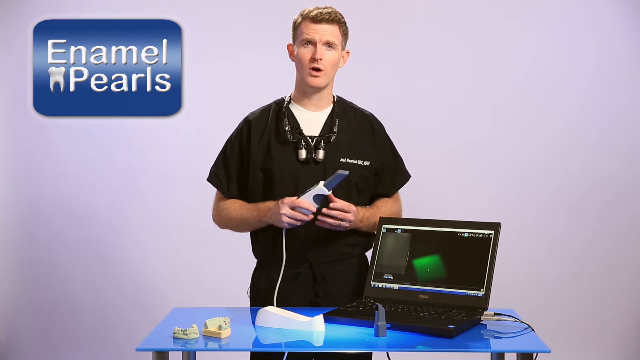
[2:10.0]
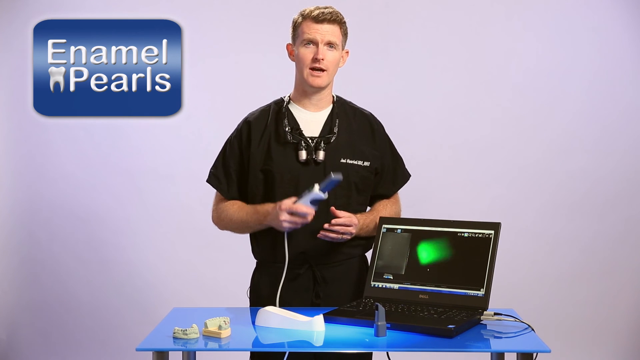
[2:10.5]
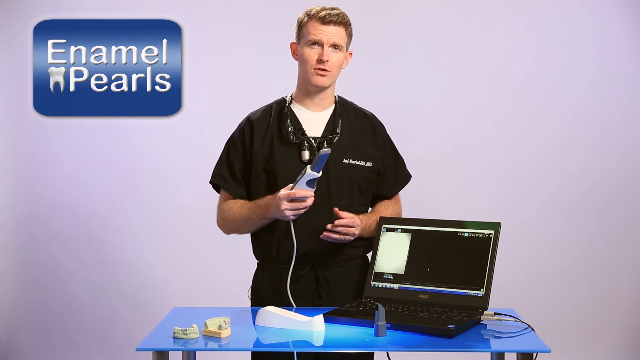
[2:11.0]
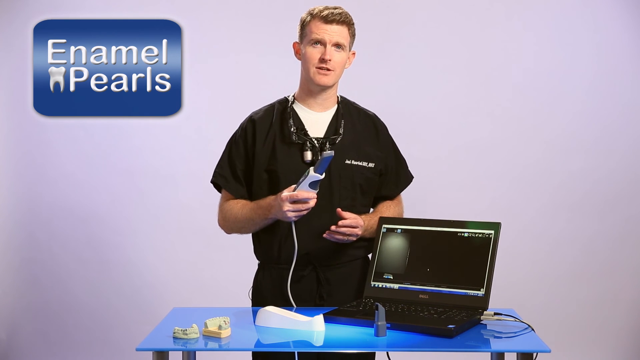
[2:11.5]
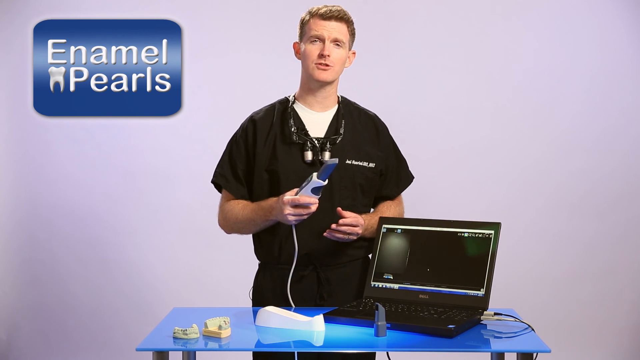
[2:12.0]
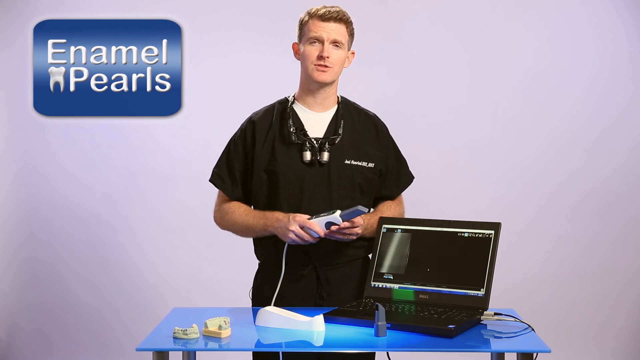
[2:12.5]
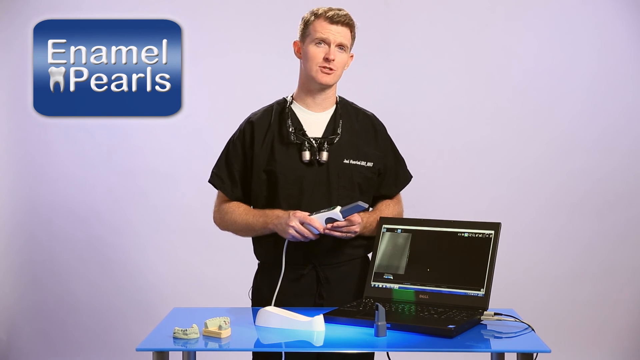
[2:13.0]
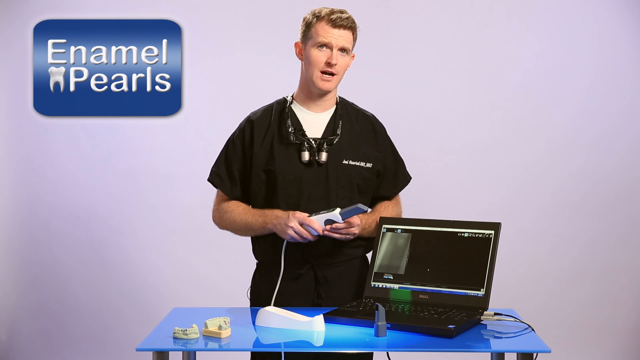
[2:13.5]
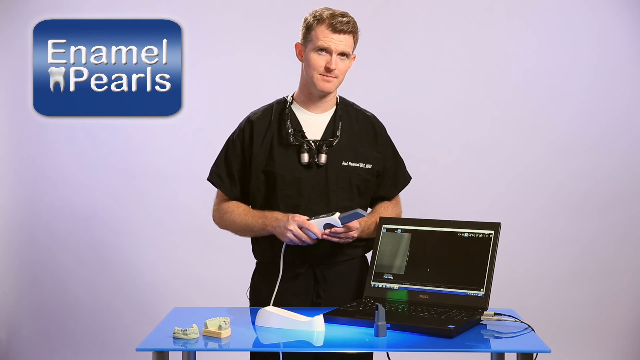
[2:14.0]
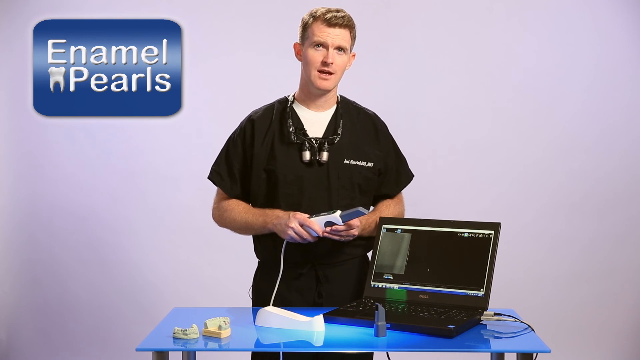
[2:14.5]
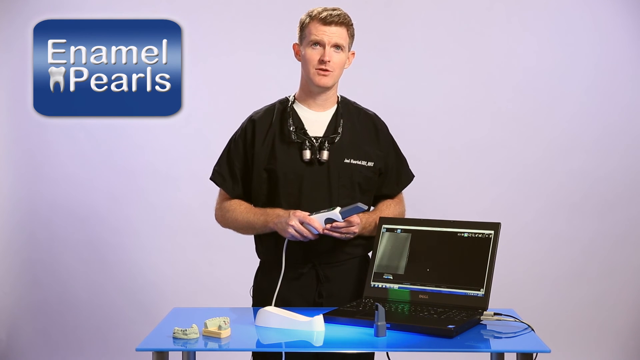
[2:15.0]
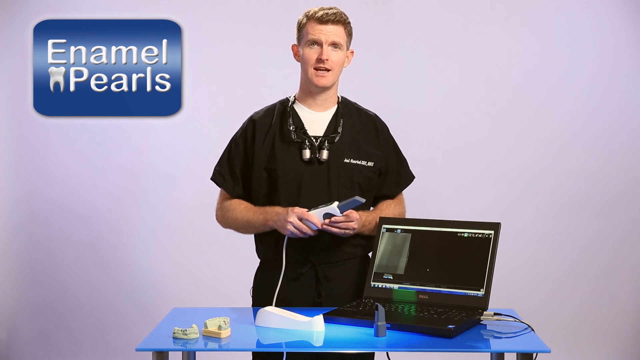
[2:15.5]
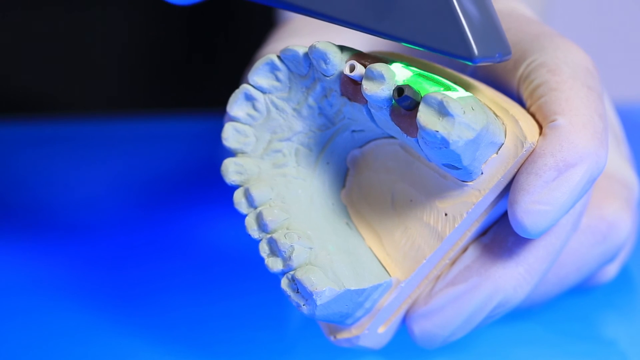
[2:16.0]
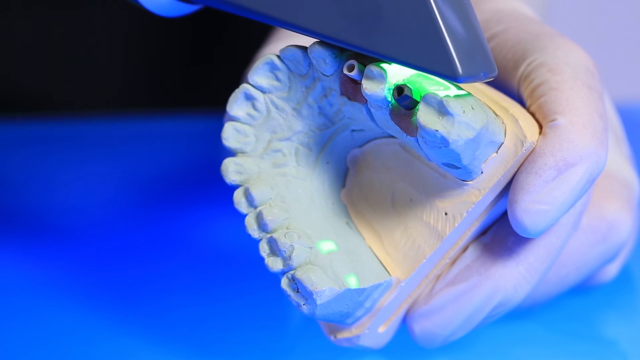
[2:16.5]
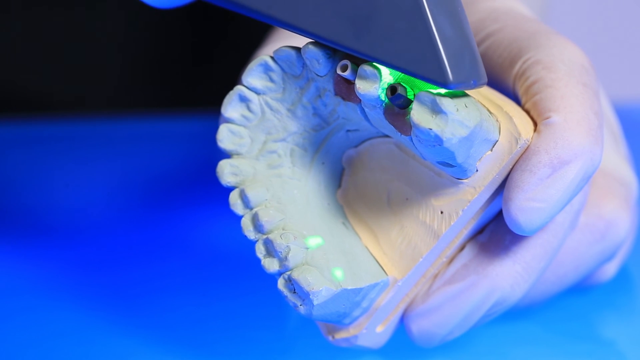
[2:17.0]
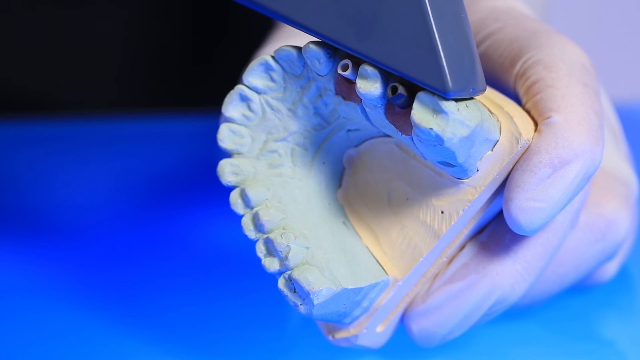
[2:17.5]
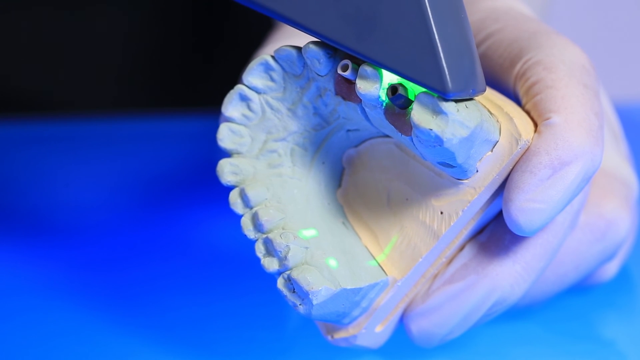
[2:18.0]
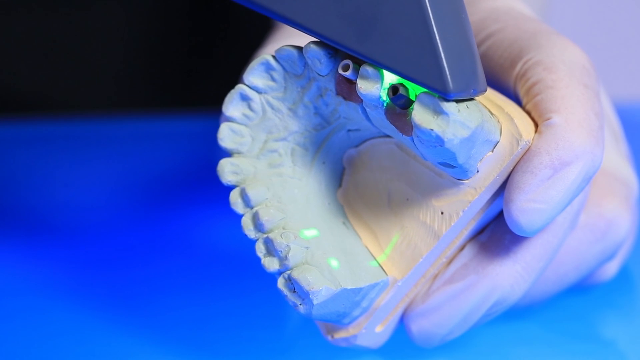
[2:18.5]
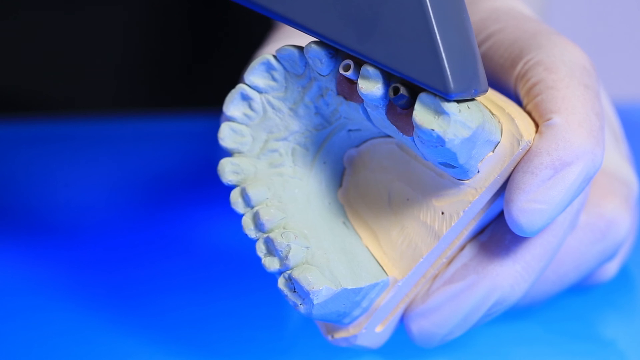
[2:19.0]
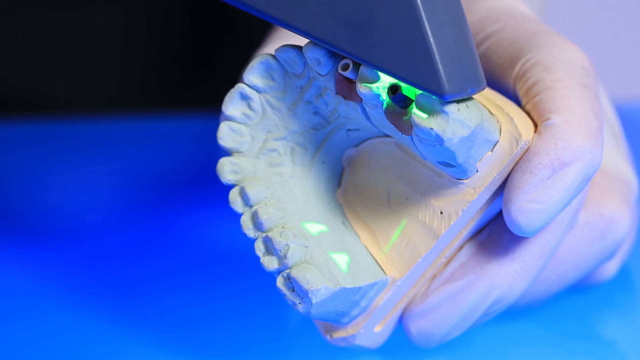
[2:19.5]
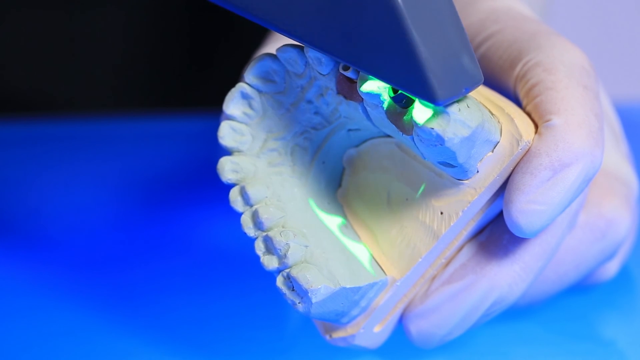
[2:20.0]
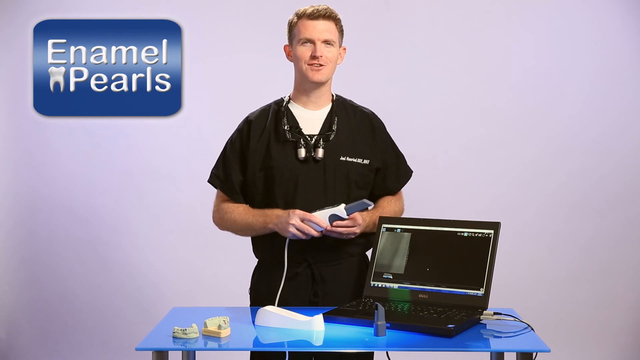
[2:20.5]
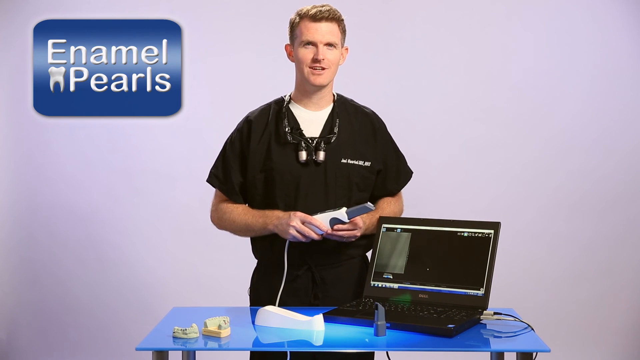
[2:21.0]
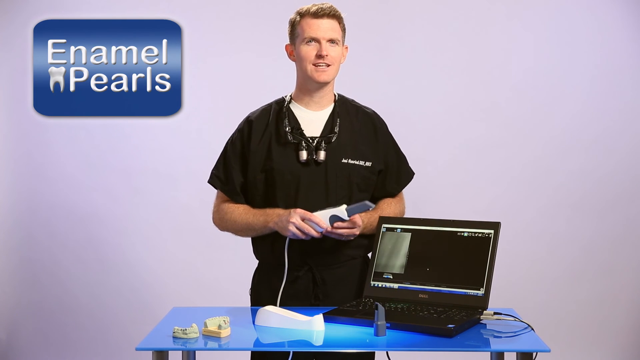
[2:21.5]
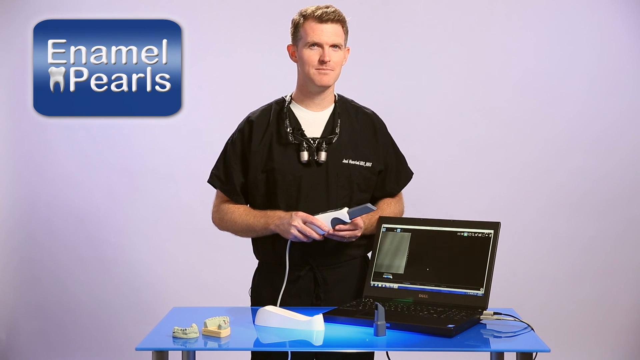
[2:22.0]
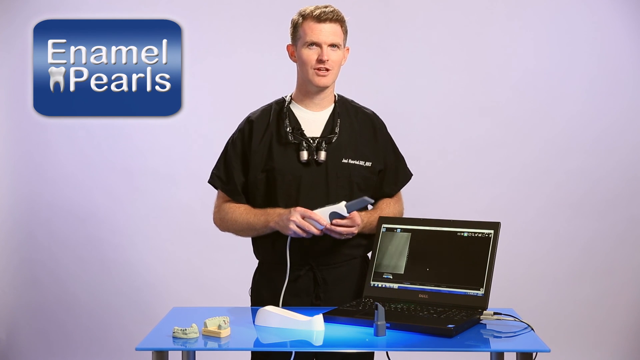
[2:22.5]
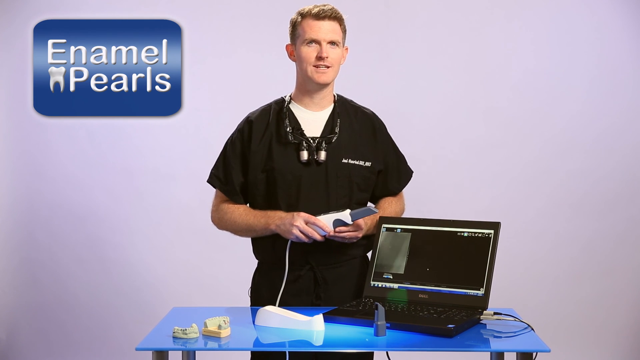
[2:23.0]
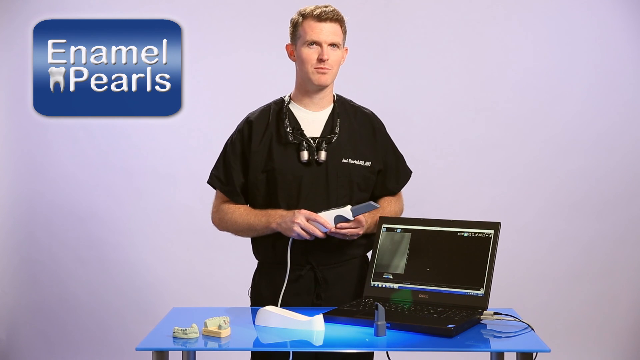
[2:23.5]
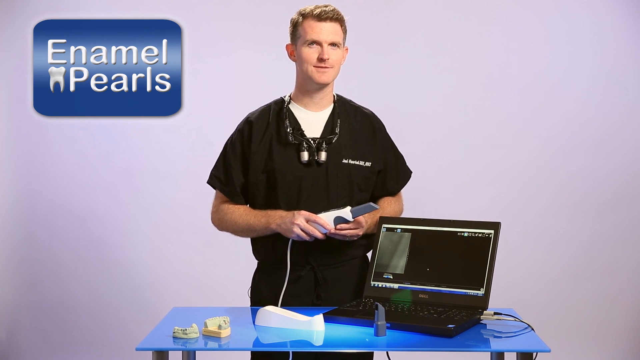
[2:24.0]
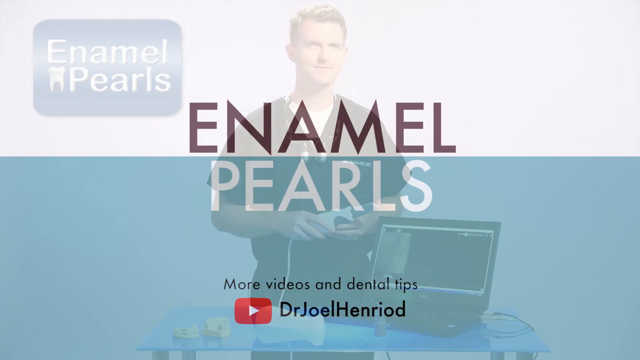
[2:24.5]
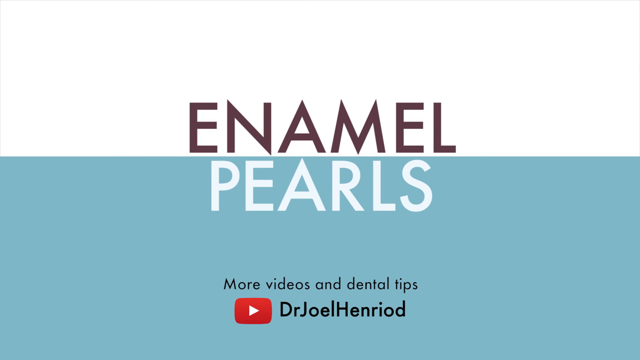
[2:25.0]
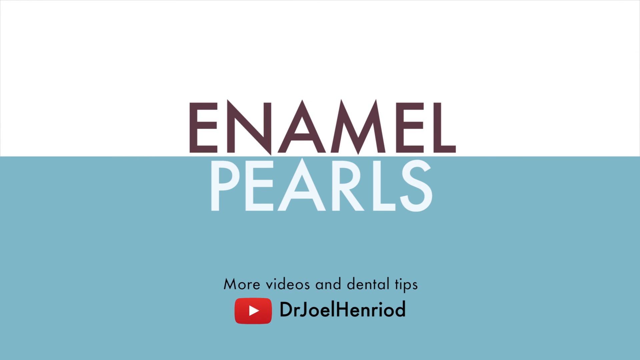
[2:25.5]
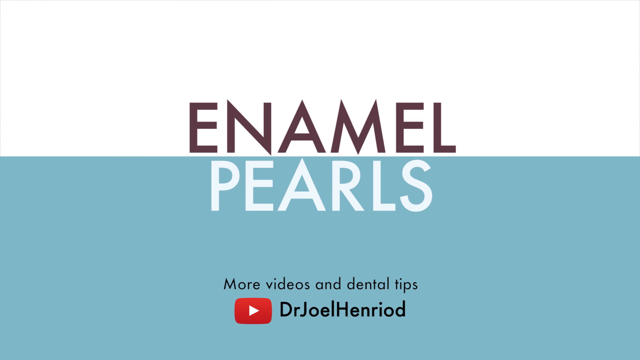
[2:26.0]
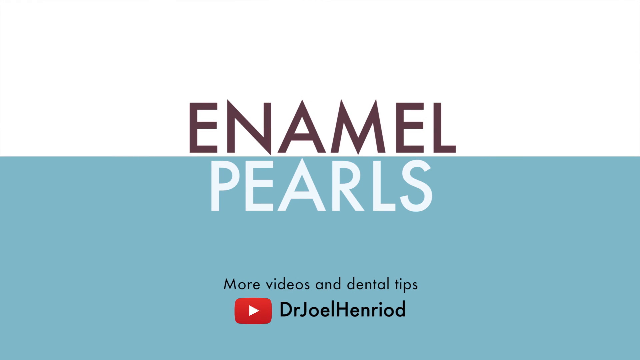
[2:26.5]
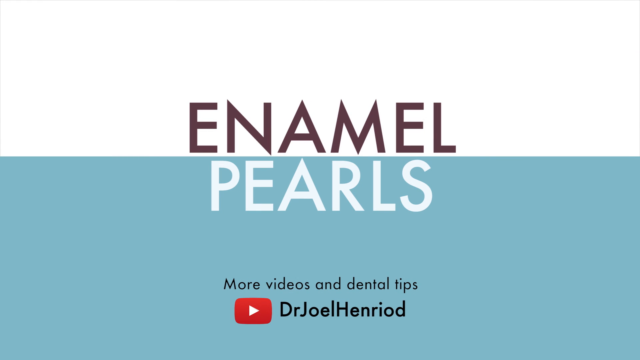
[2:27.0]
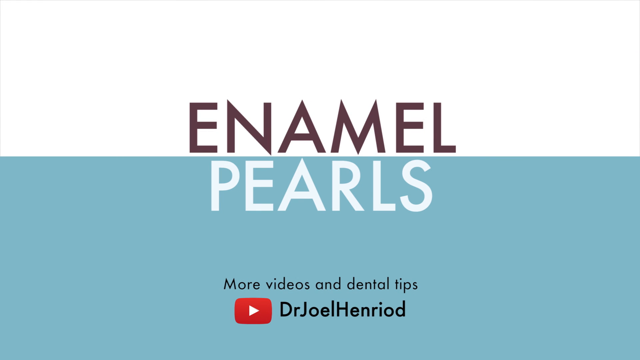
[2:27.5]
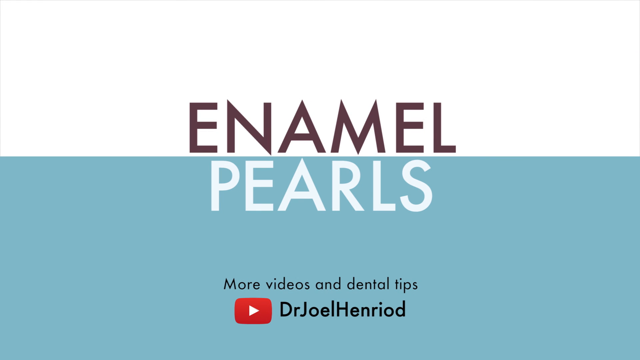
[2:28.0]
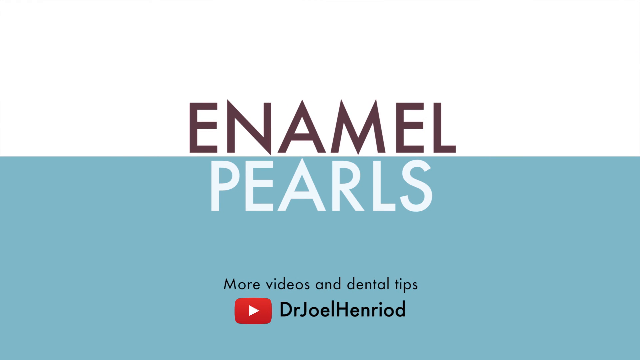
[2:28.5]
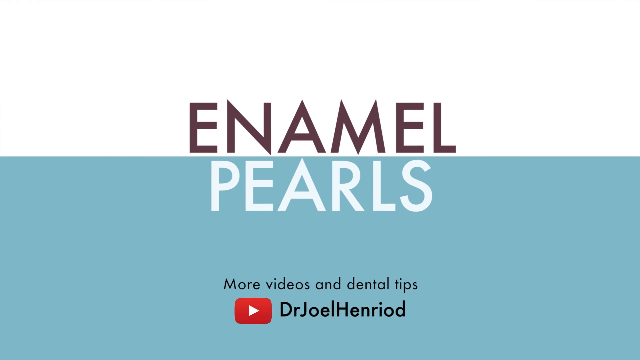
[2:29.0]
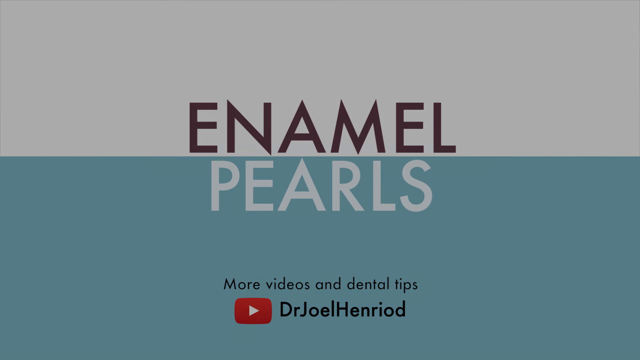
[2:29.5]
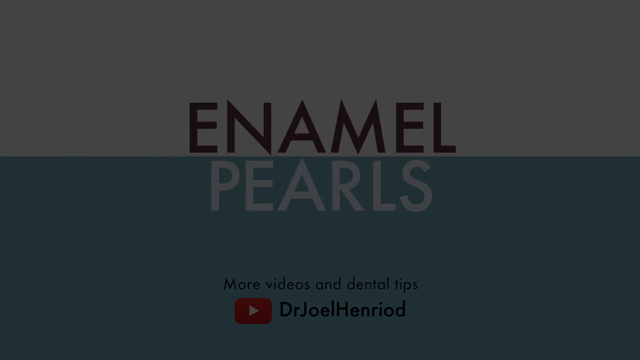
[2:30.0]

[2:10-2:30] The doctor/dentist, wearing a black shirt, speaks to the camera while holding the device toward it, in front of a white background, with text beginning "enamel" on the left side of the screen. The laptop remains in front of him and the device stays on. The video cuts back to the mold with two screws in it, which he scans with the device, shooting light at it, as he speaks to the camera and smiles. The final shot reads "enamel rules" with "more videos and dental tips" below it, shows the YouTube logo, and on the right side reads "Dr Drew Henry Odd". The screen is split, with the top in white and the bottom in green.